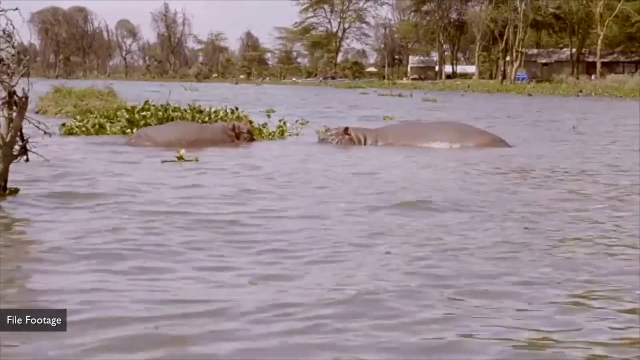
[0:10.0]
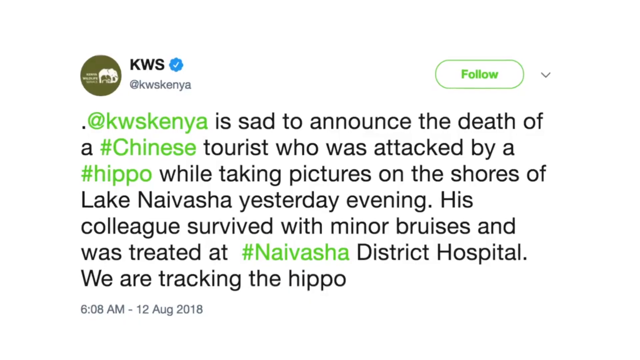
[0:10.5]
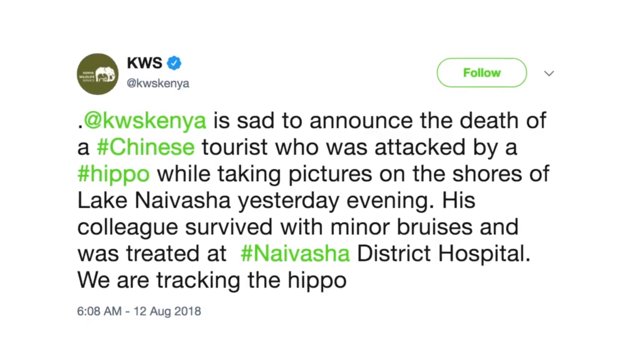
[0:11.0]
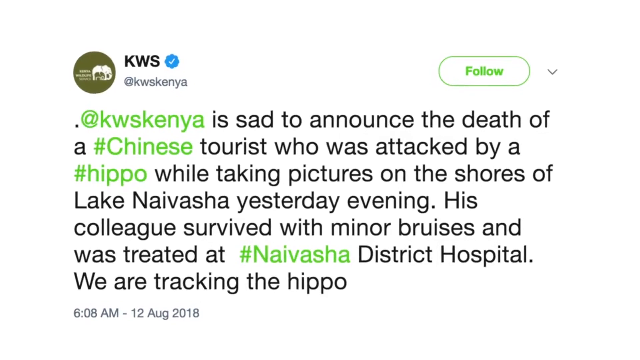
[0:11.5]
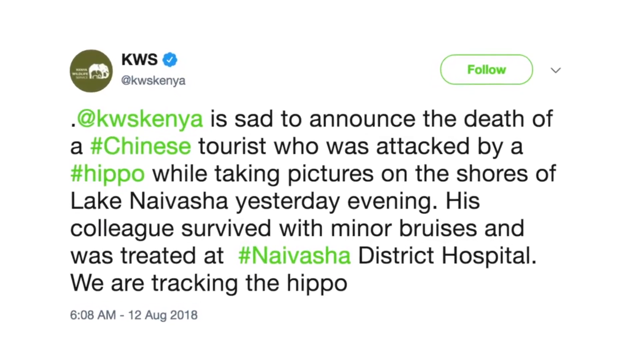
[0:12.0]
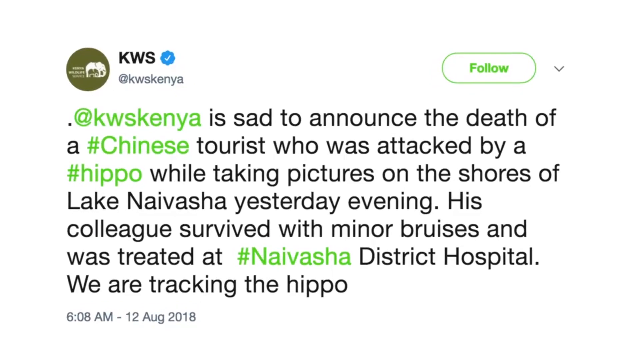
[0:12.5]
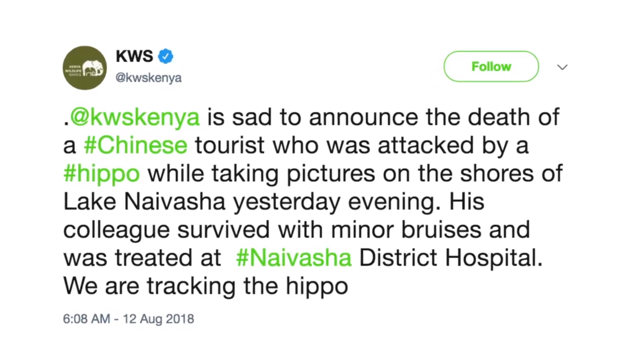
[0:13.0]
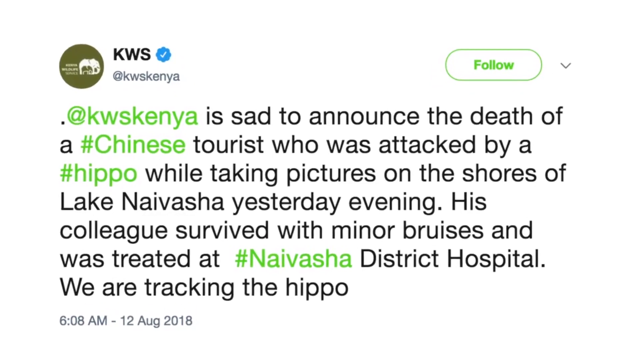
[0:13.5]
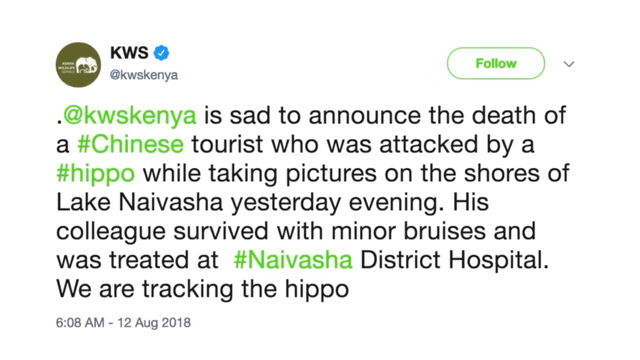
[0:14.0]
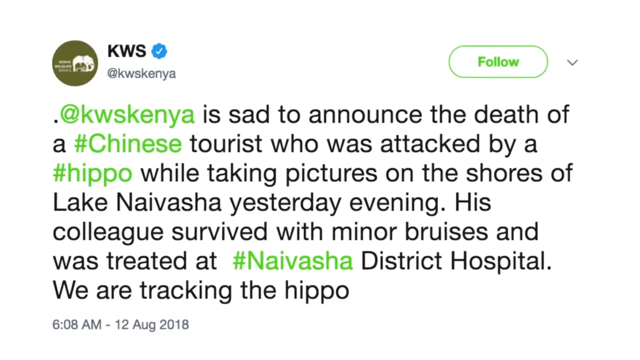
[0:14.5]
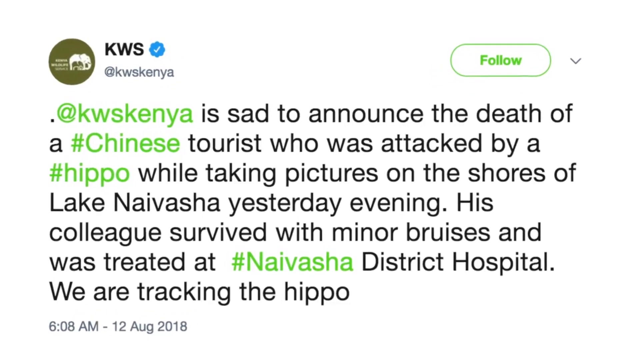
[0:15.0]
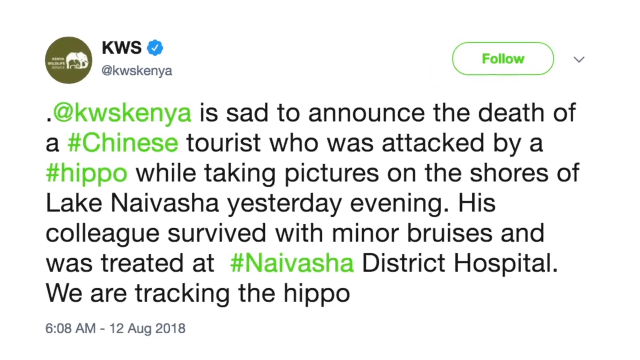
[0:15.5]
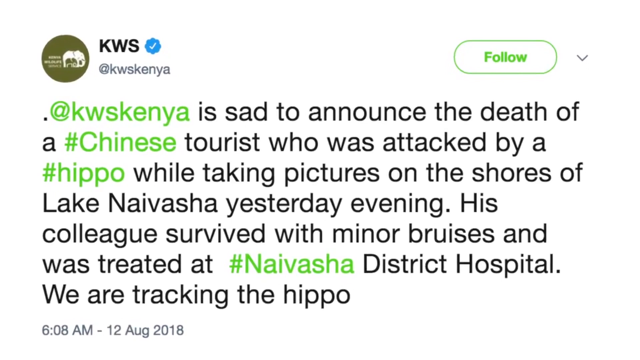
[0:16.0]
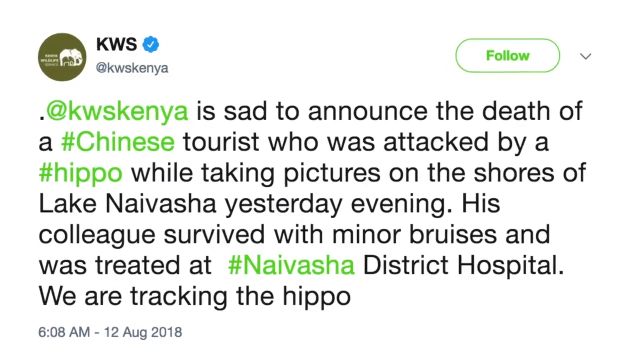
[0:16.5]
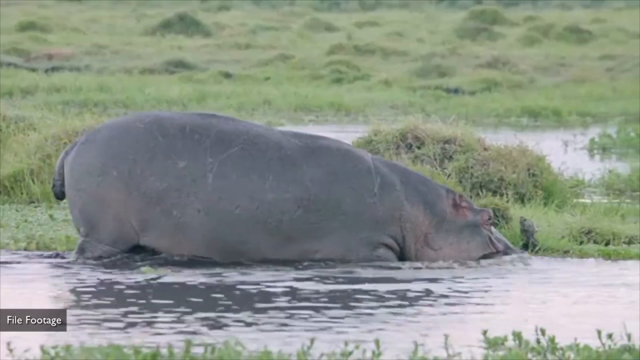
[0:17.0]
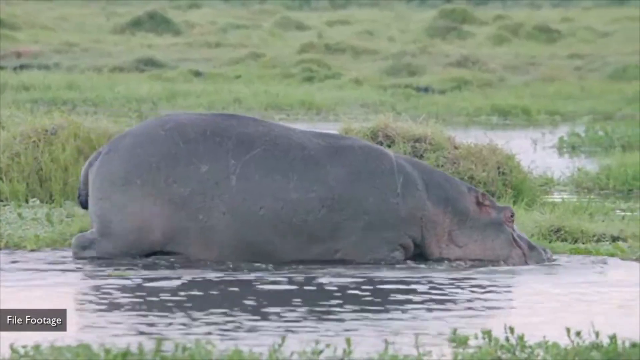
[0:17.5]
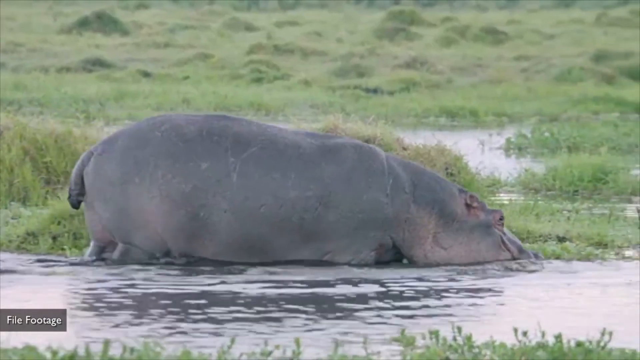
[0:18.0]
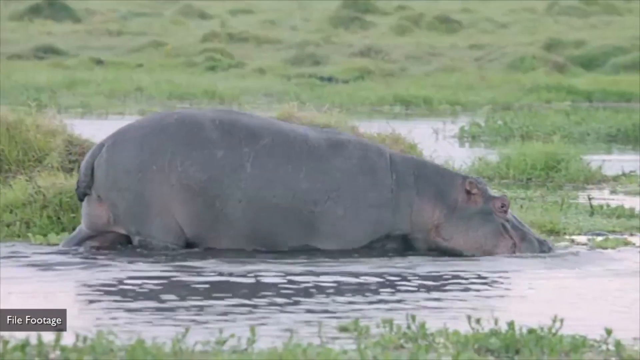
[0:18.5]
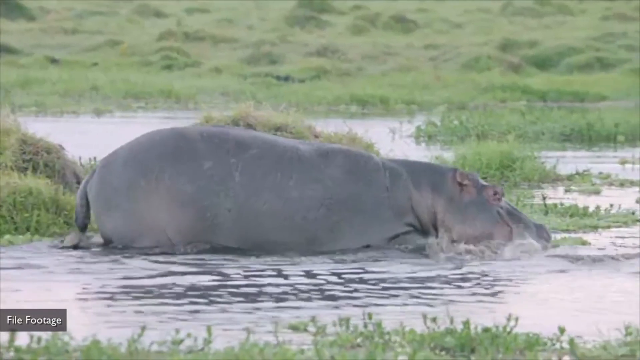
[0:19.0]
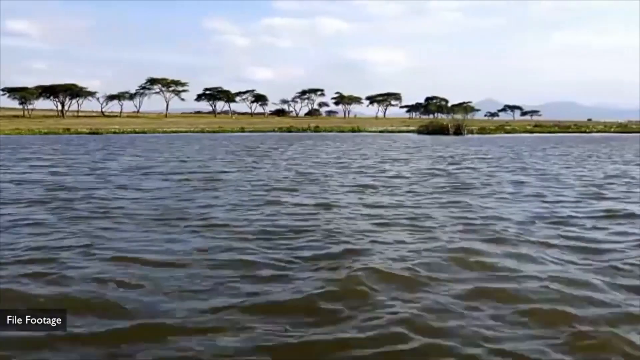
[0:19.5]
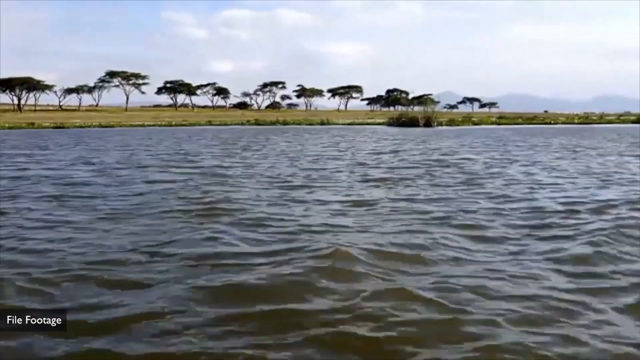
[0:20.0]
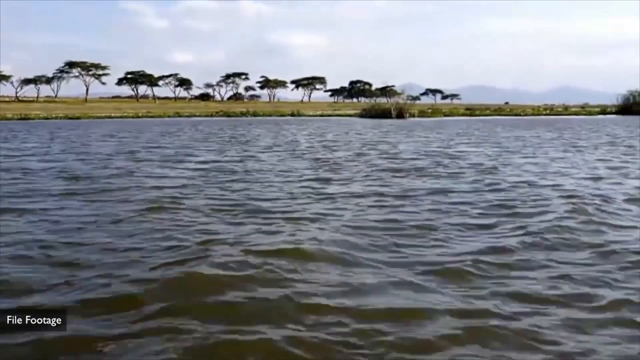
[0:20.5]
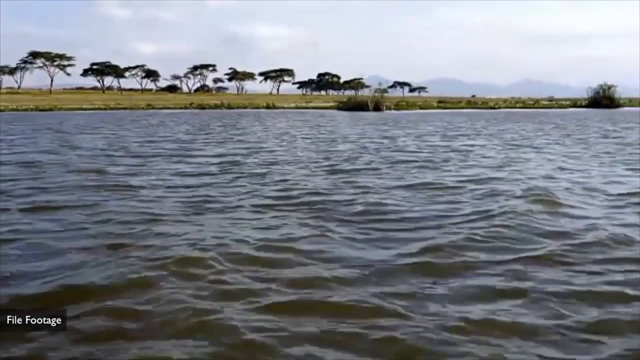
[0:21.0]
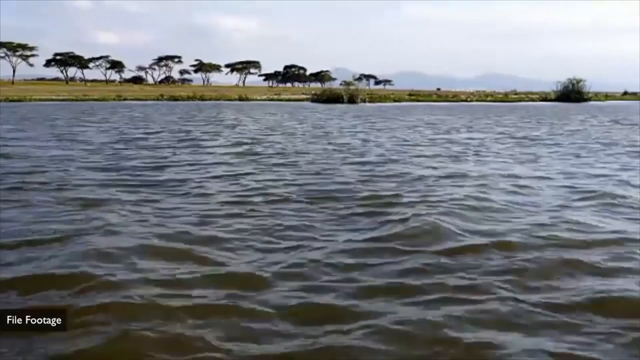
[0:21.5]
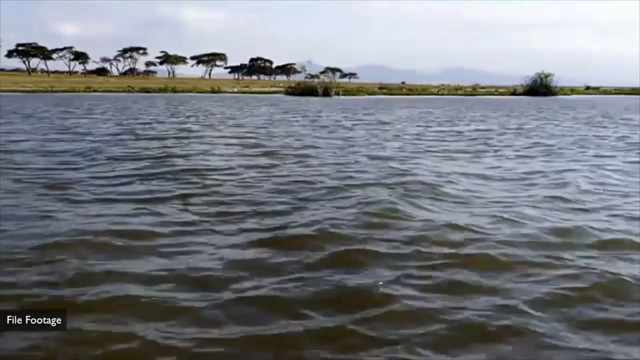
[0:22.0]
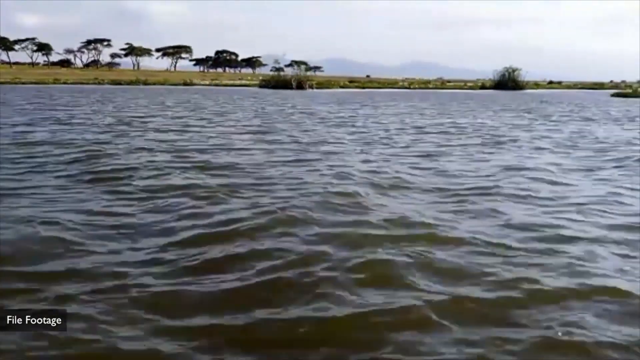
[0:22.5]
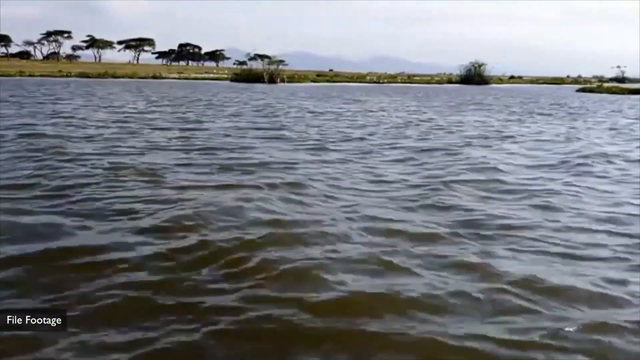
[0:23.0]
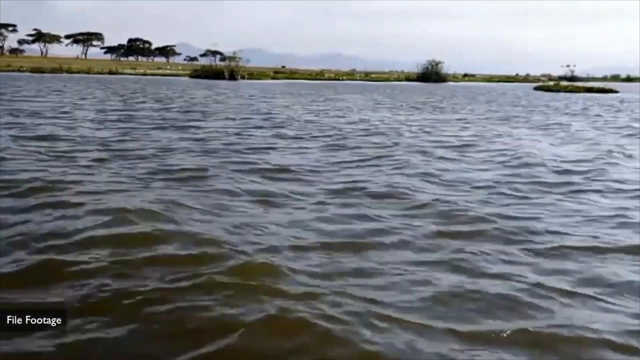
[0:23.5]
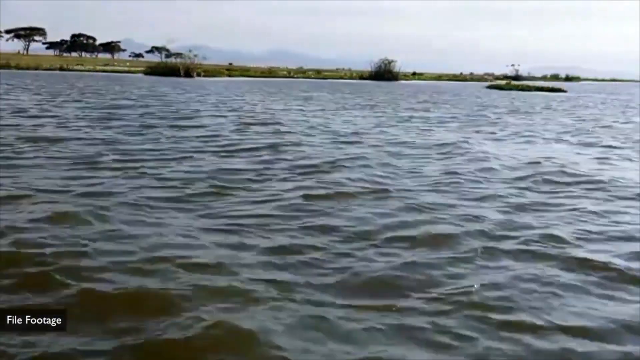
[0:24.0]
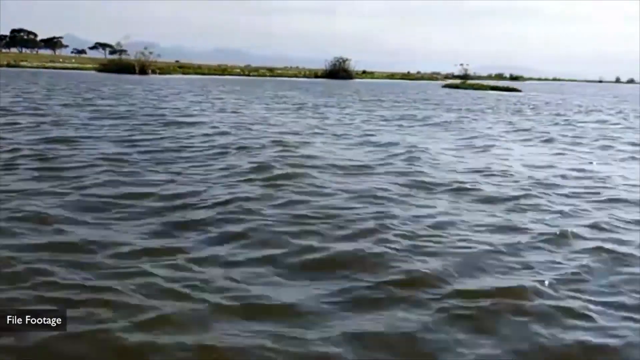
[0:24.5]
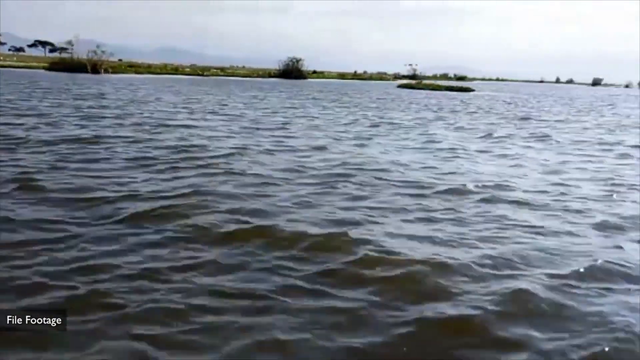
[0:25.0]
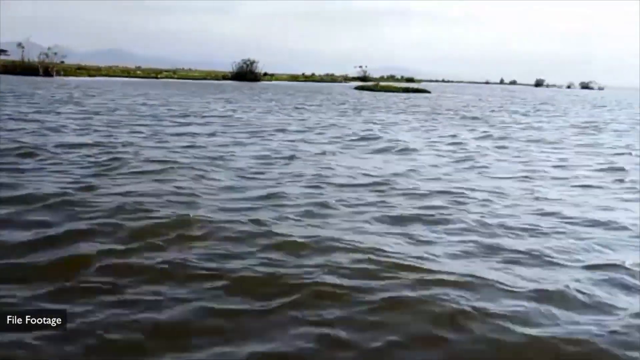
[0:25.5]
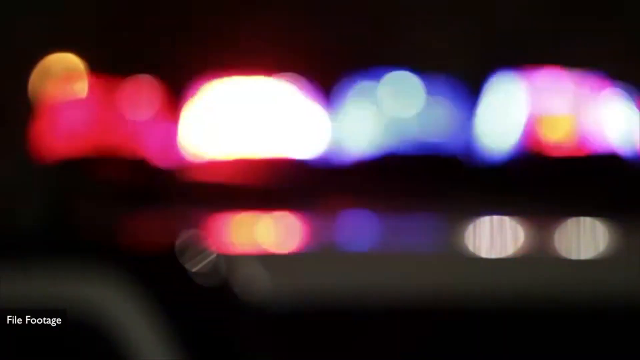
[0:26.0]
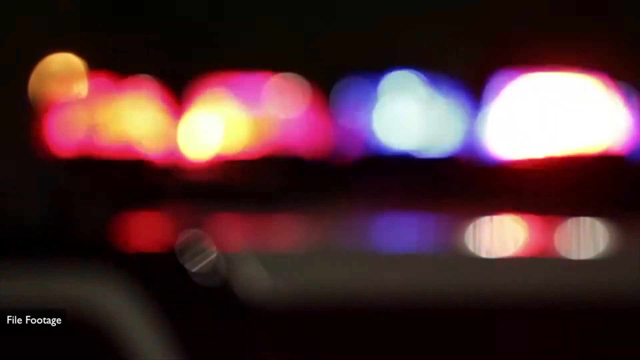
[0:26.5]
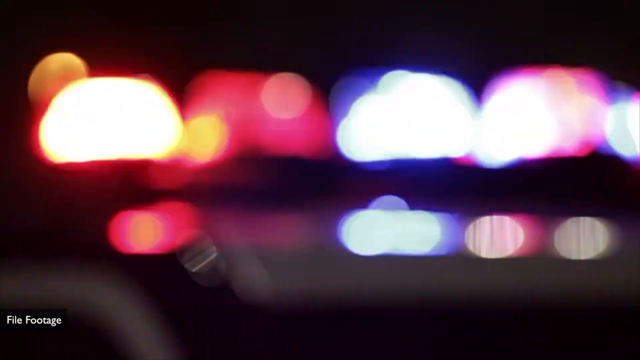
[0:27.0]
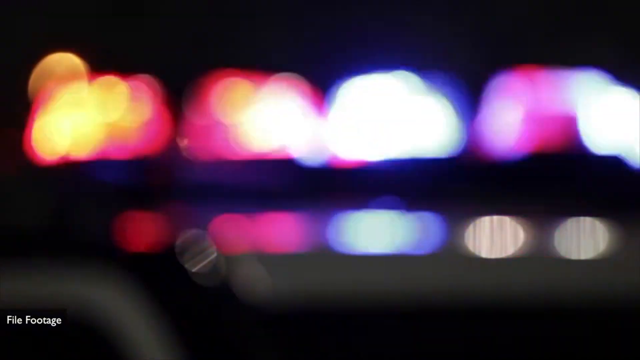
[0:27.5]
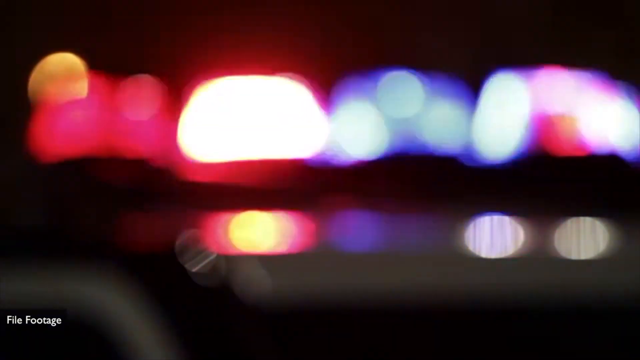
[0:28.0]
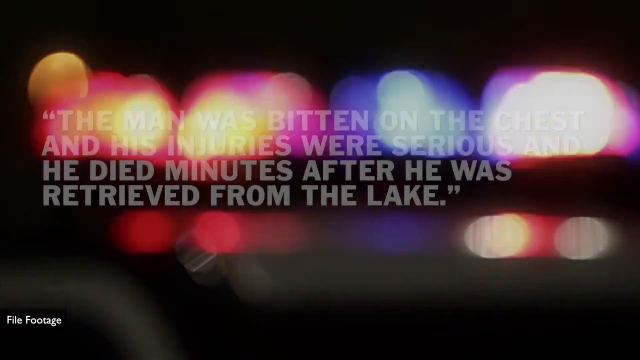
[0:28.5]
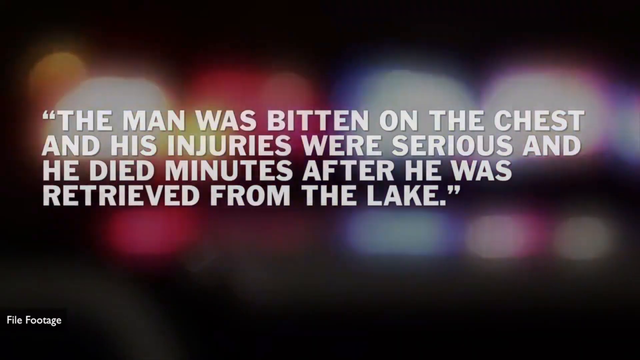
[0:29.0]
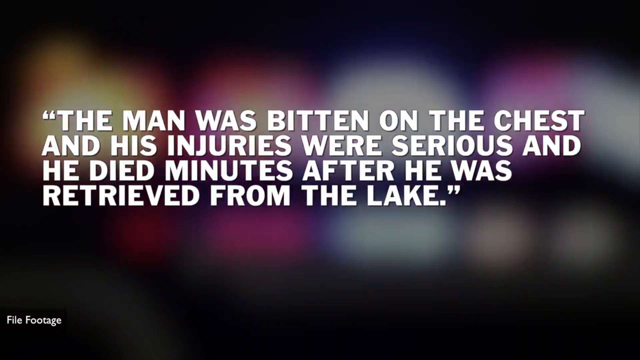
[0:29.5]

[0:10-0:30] A tweet appears announcing the death of a Chinese tourist who was attacked by a hippopotamus while taking pictures on the shore of a lake the previous evening; it says a colleague survived with minor bruises and was treated at a district hospital, and that the hippo is being tracked. A hippo then walks out of the water, still partly in it, its whole body at the edge of the river, with a lot of green grass around. The lights of an ambulance are visible, seemingly there to pick up the man who died.